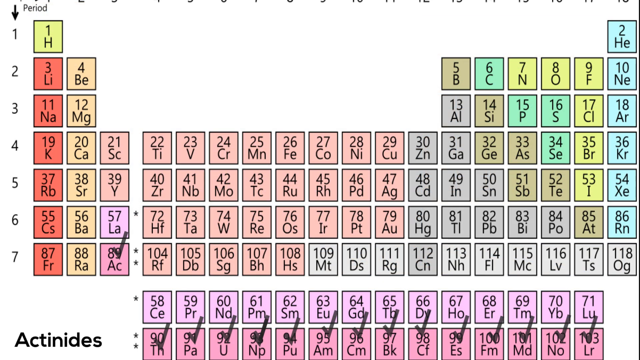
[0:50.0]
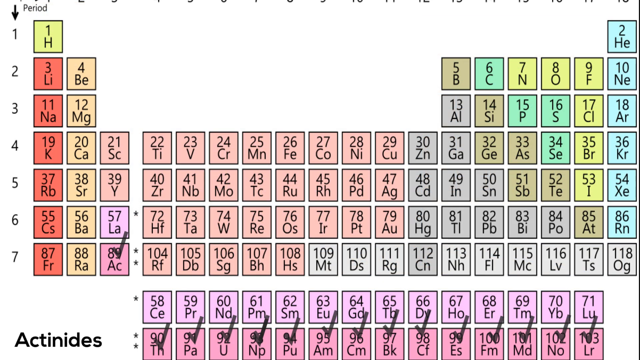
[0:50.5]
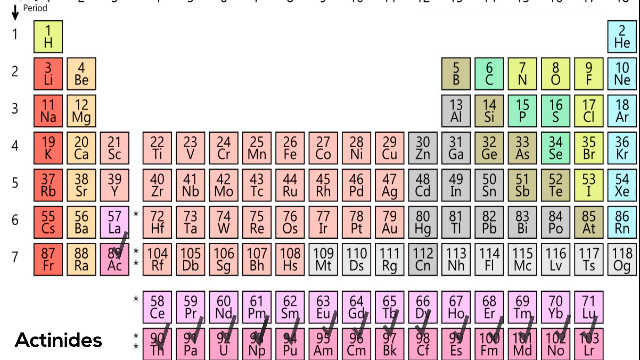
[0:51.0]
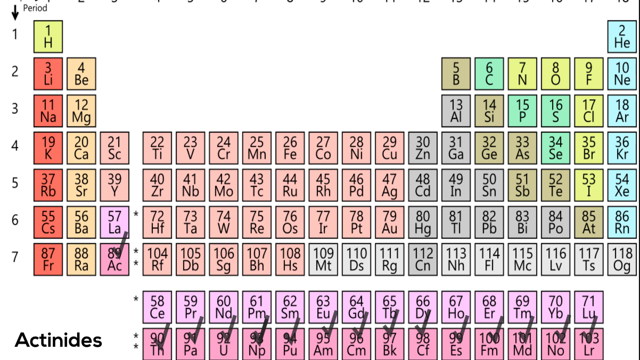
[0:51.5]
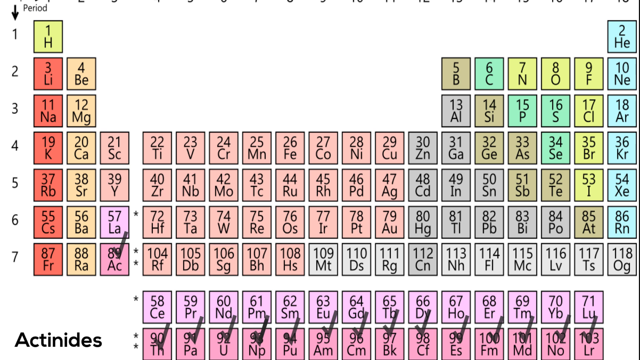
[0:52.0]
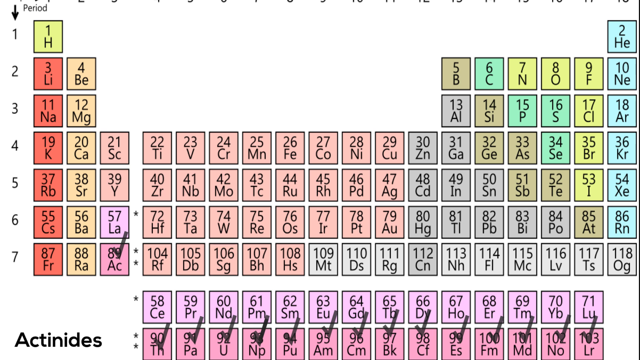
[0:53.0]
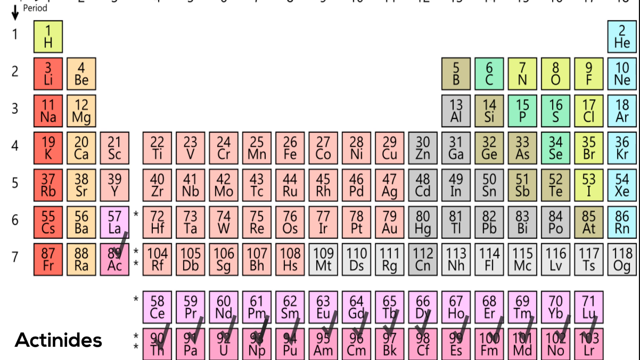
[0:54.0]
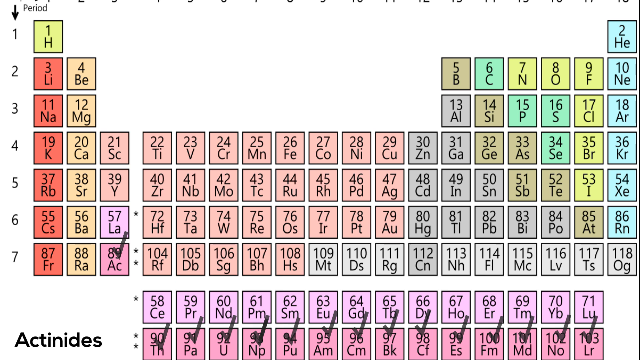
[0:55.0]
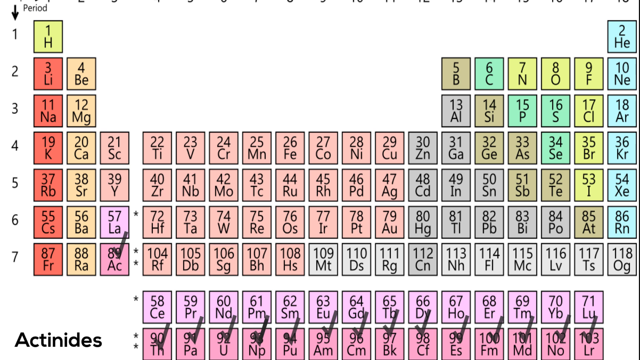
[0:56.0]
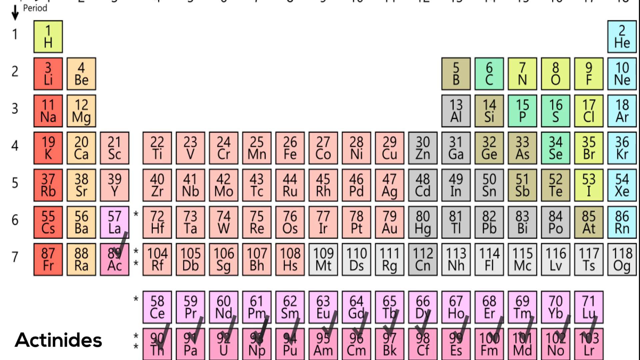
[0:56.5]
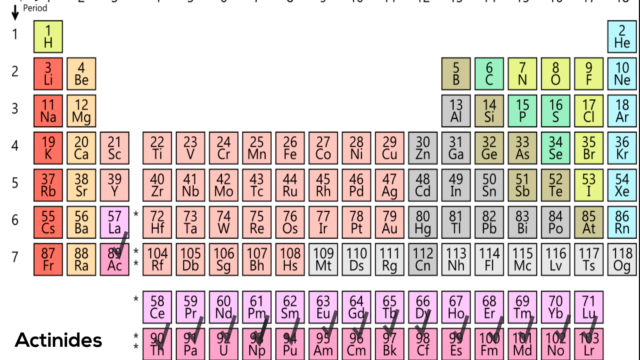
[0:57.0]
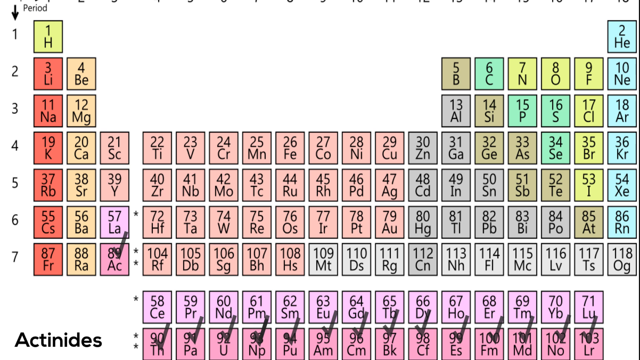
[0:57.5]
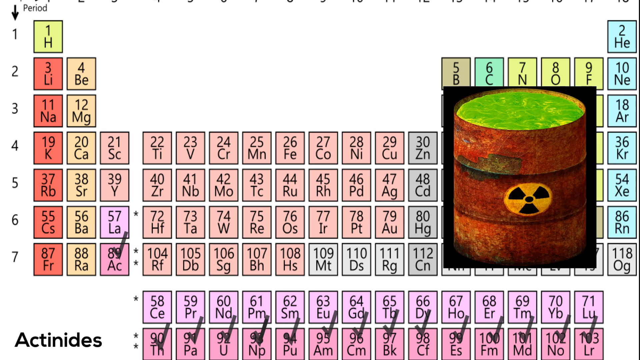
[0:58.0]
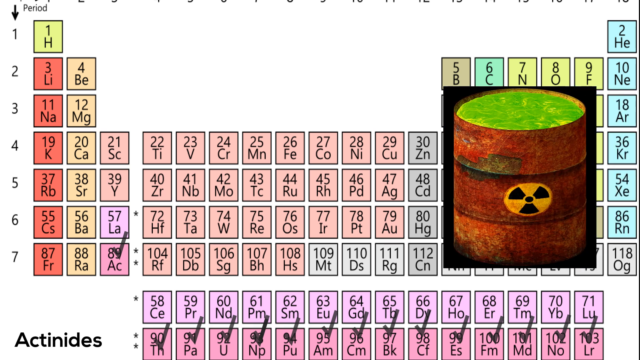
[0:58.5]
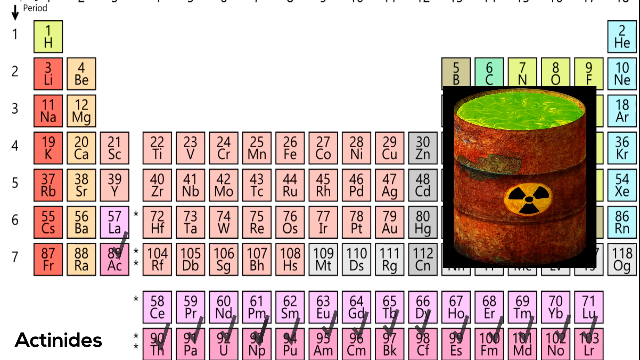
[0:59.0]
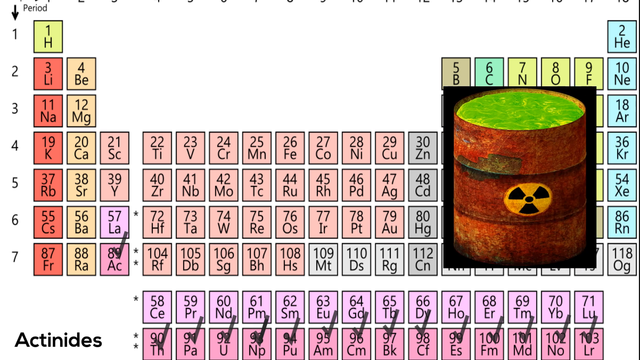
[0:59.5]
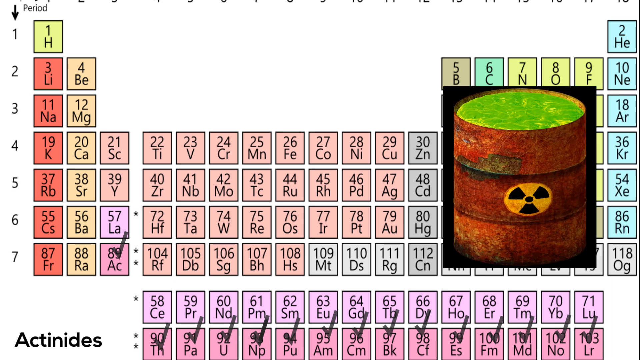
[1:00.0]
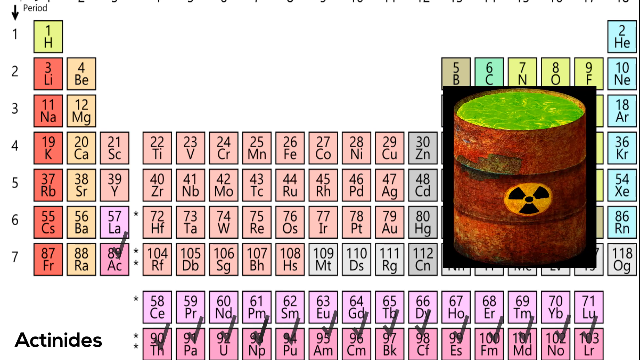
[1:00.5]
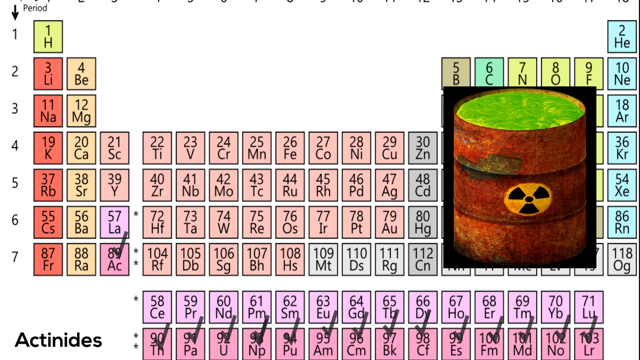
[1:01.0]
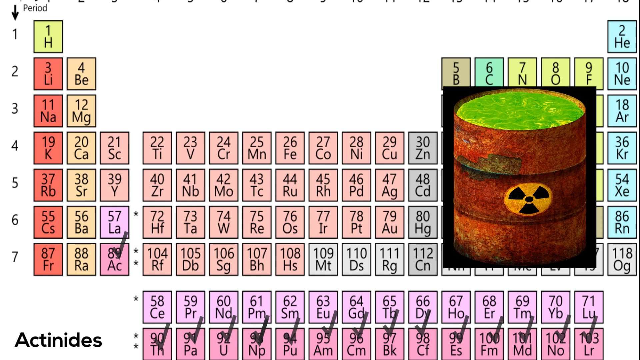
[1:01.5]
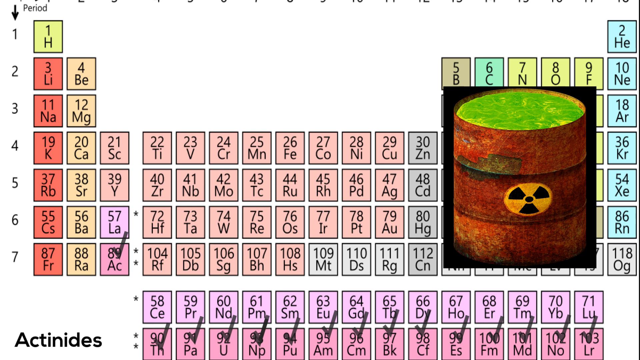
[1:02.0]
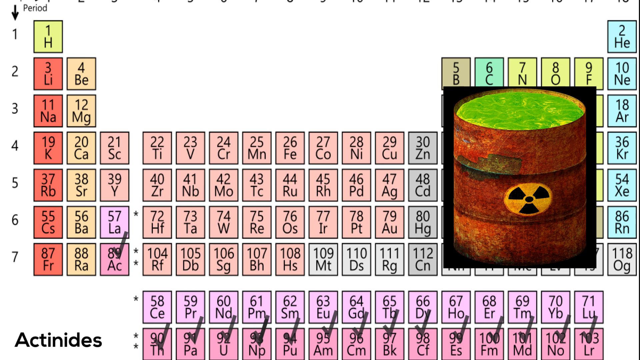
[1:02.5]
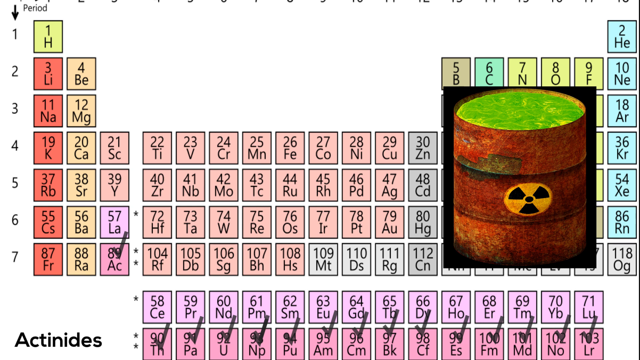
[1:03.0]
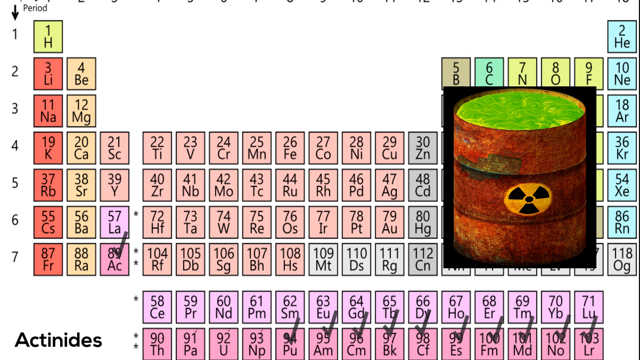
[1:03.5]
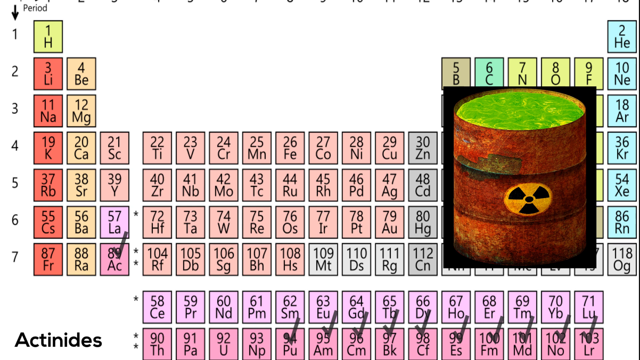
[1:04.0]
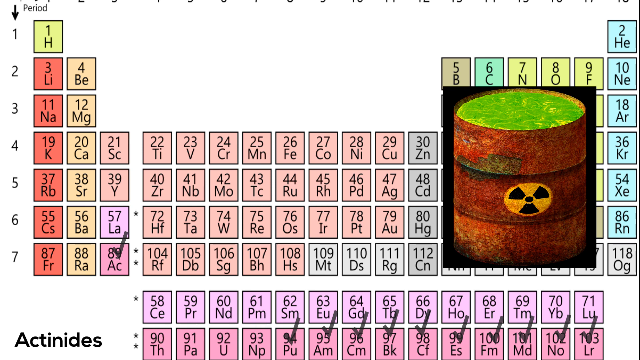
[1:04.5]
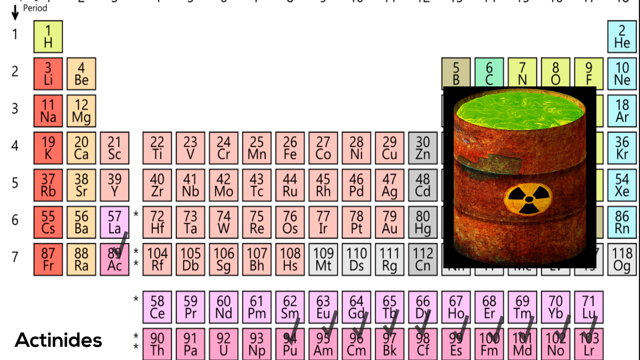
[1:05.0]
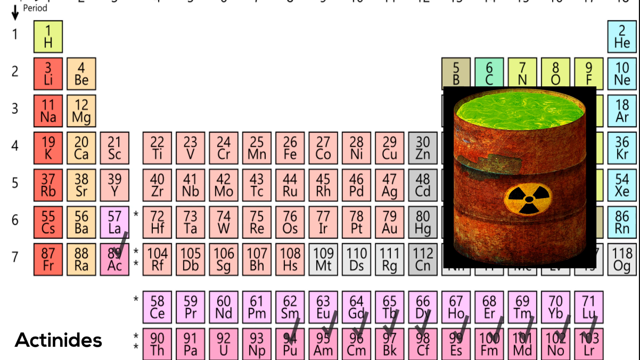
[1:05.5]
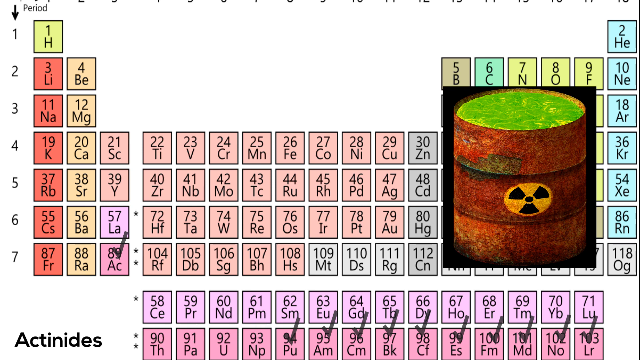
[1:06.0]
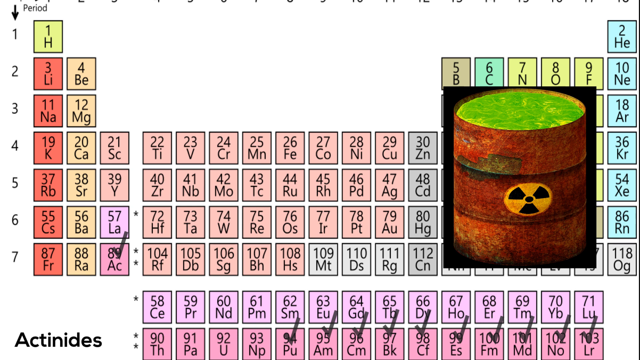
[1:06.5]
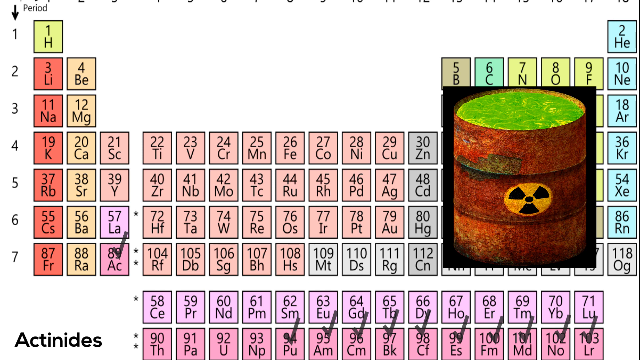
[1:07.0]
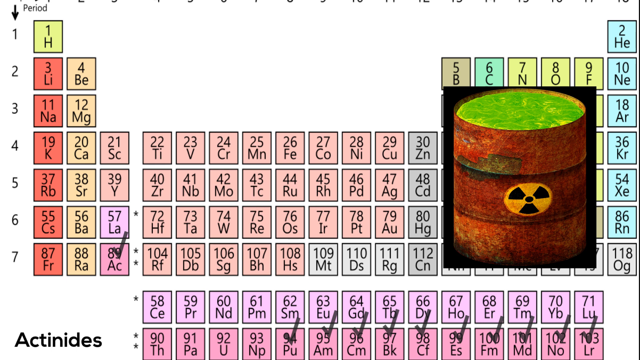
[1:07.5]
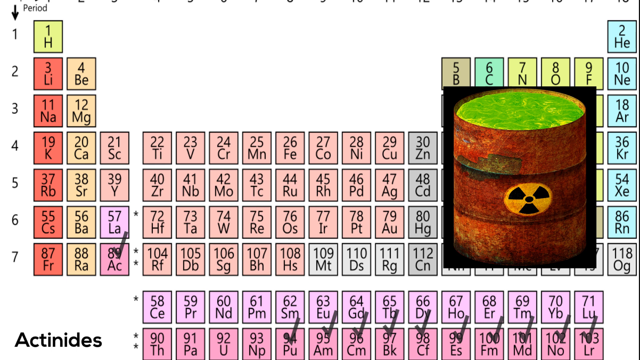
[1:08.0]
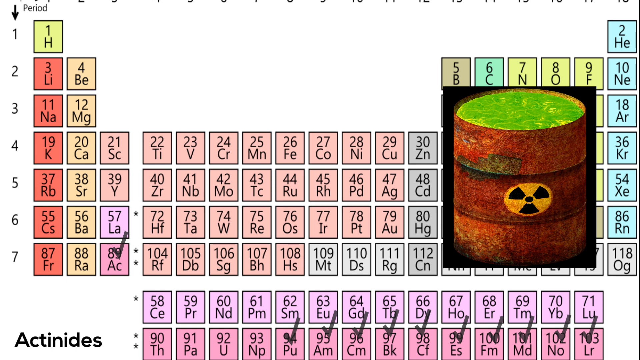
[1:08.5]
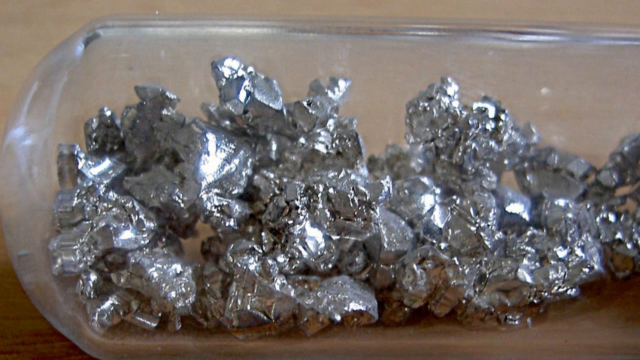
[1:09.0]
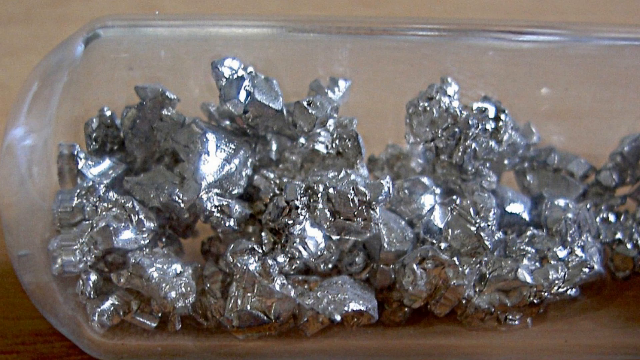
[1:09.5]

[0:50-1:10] More of the periodic table is shown. A checkmark appears to be placed by number 89, AC, and checkmarks are placed on every element in the bottom row, the acinetas. The toxic oil drum from earlier then comes in from the right and just sits there. After a while, four of the checkmarks are removed from elements 90-93. The video transitions to a picture of a bunch of silver rocks glistening in a plastic container; they look very shiny, and there are quite a lot of them. Only the top left part of the container is visible.